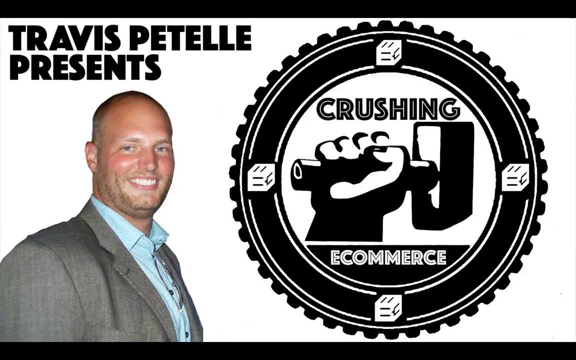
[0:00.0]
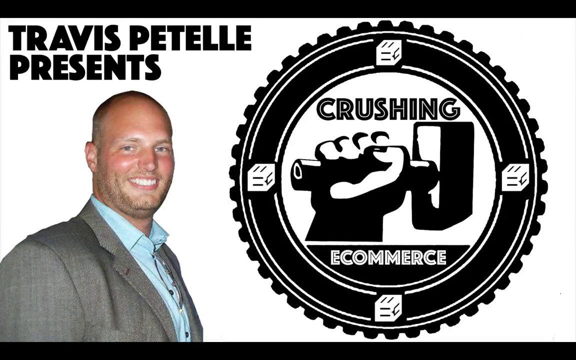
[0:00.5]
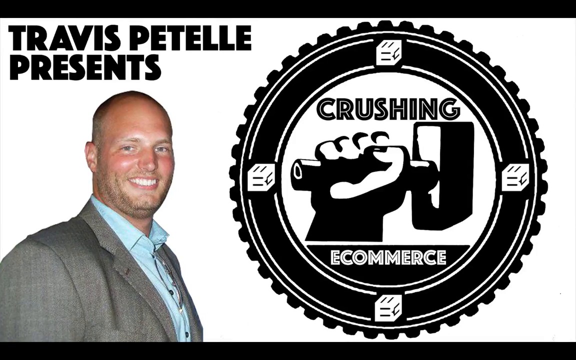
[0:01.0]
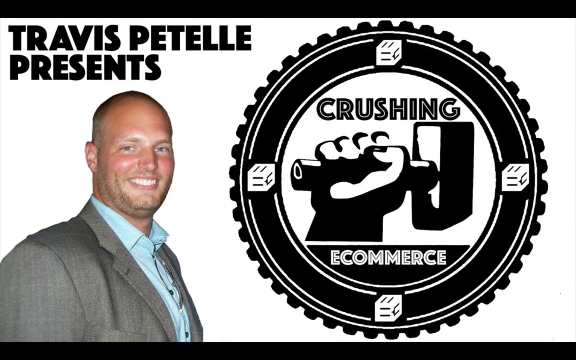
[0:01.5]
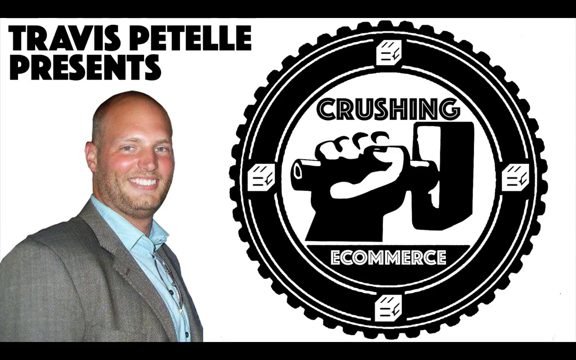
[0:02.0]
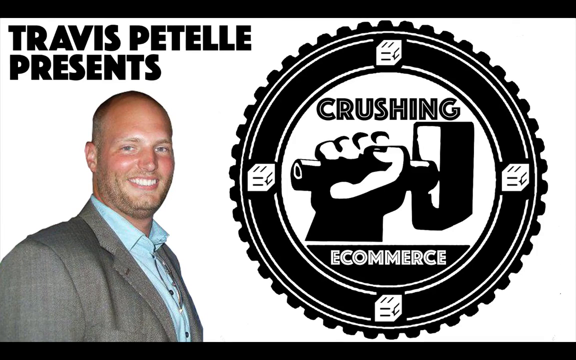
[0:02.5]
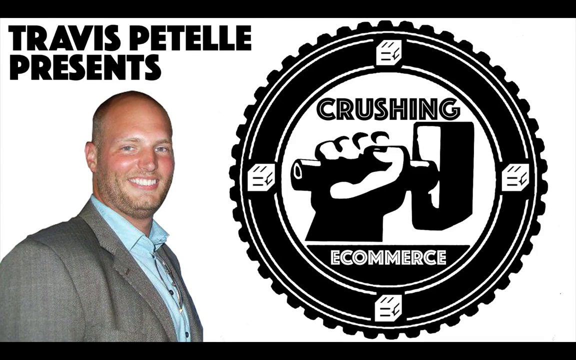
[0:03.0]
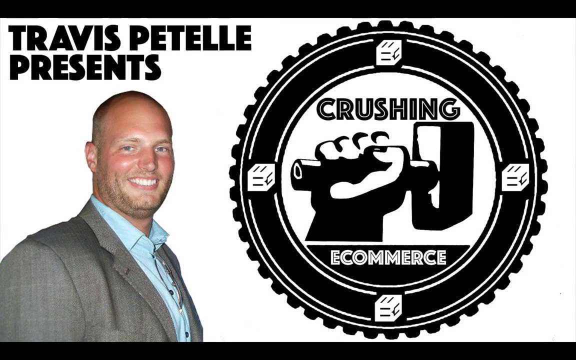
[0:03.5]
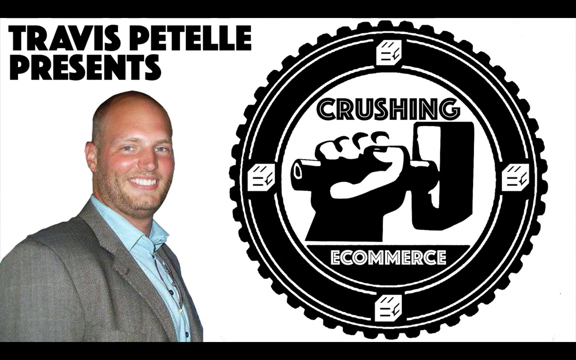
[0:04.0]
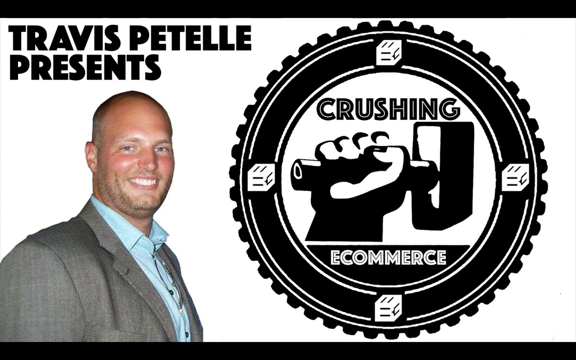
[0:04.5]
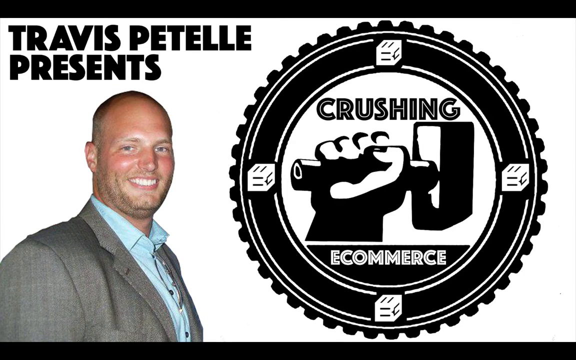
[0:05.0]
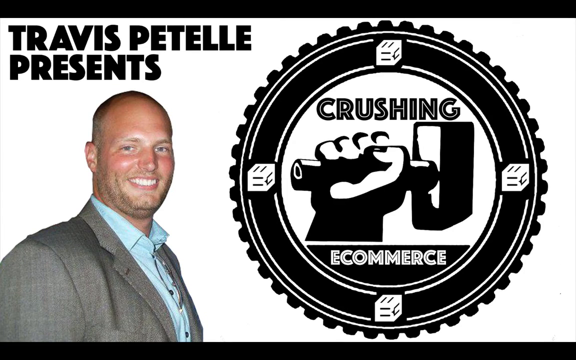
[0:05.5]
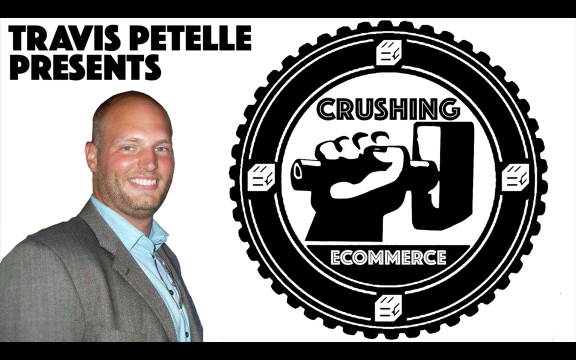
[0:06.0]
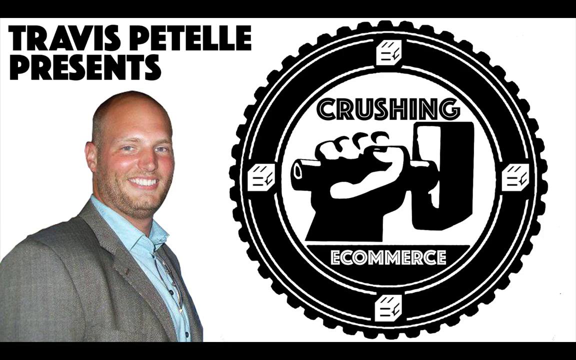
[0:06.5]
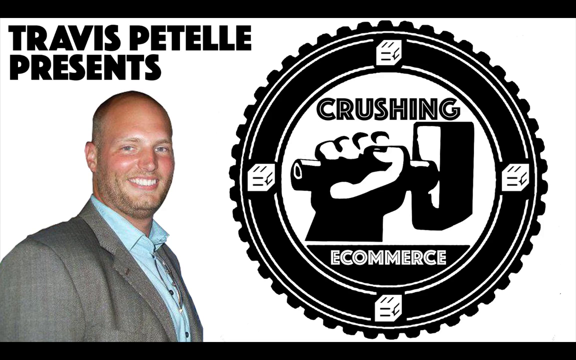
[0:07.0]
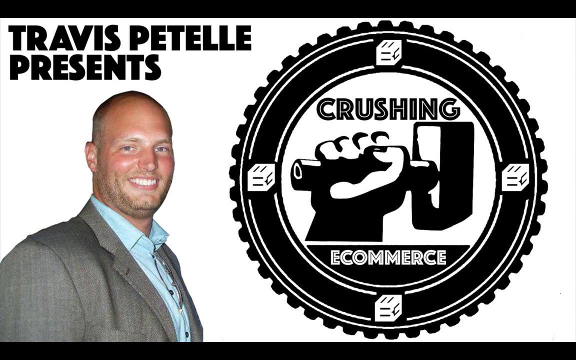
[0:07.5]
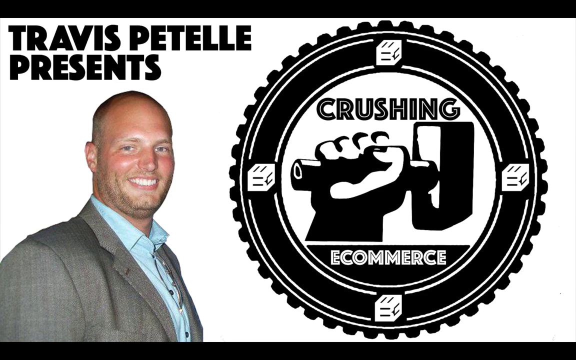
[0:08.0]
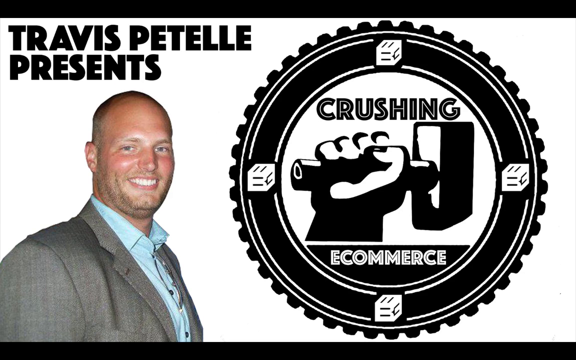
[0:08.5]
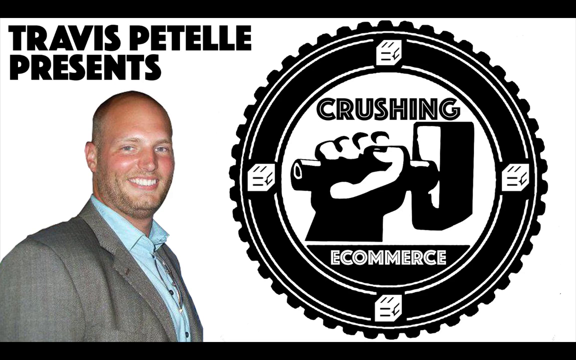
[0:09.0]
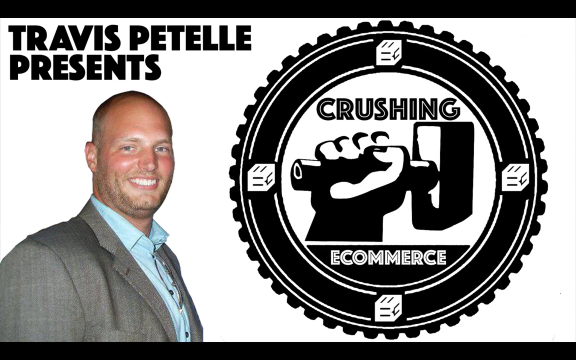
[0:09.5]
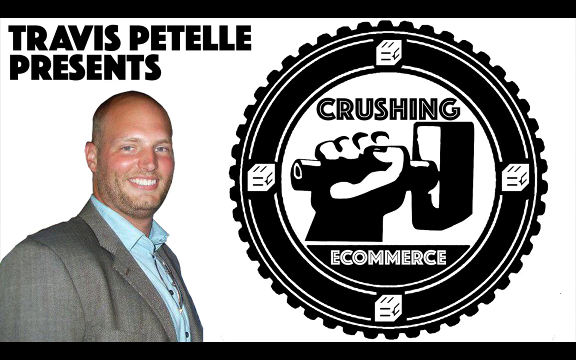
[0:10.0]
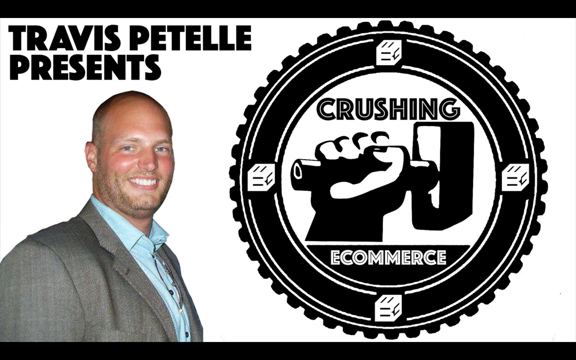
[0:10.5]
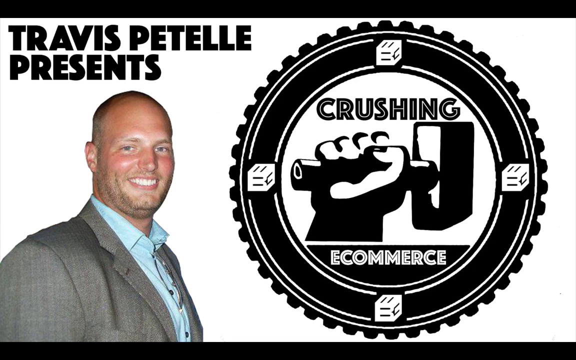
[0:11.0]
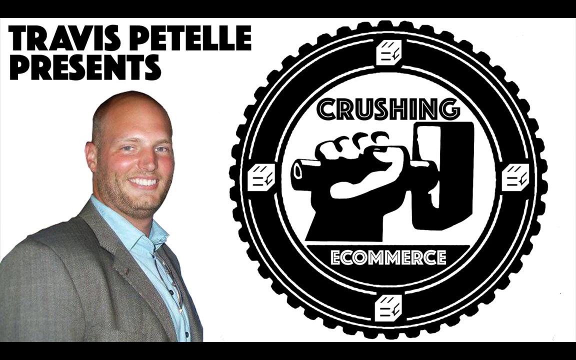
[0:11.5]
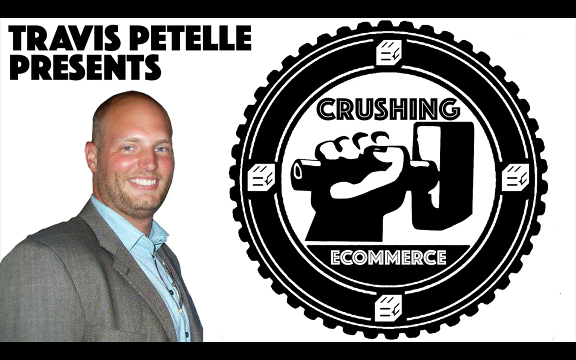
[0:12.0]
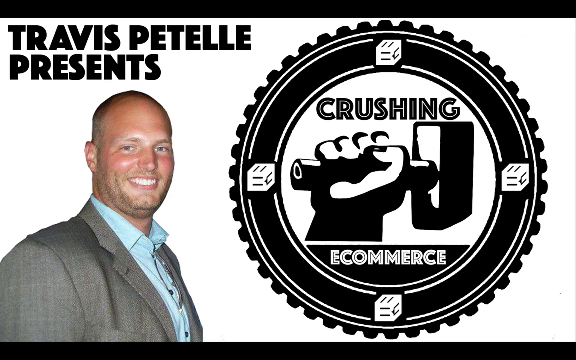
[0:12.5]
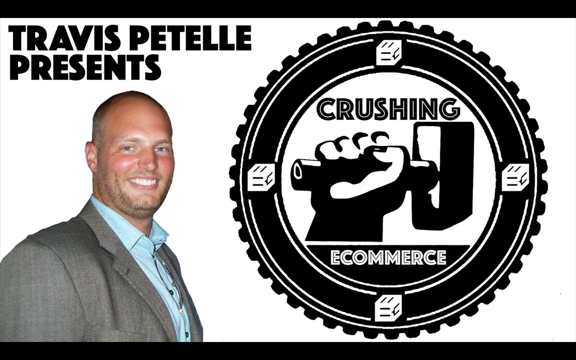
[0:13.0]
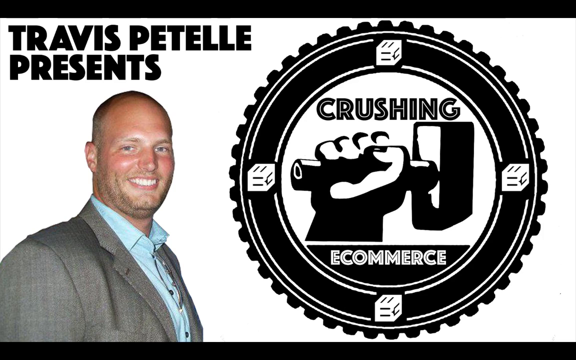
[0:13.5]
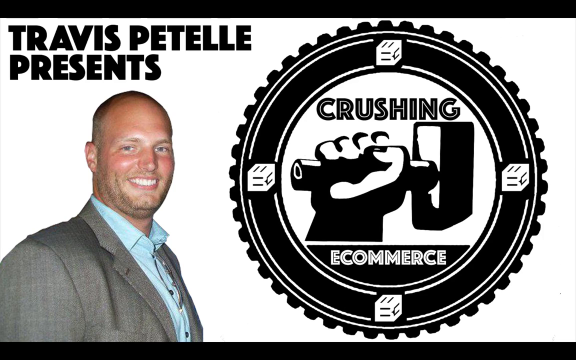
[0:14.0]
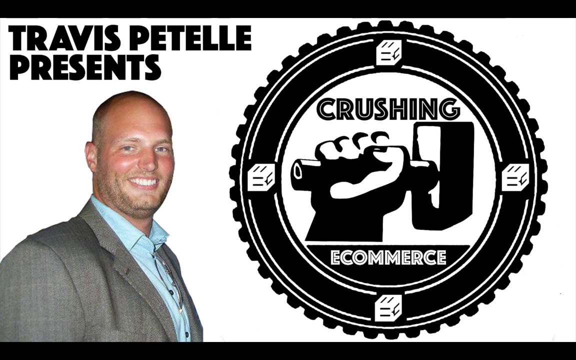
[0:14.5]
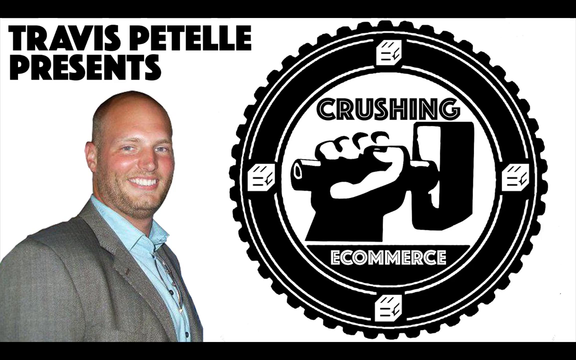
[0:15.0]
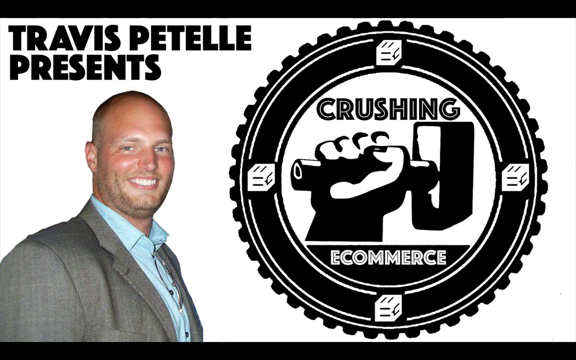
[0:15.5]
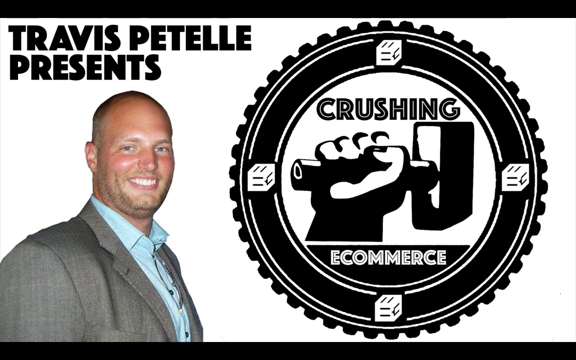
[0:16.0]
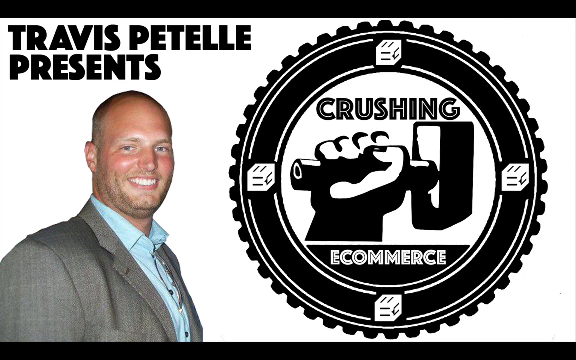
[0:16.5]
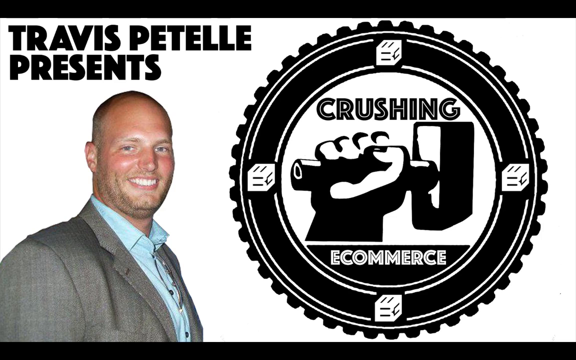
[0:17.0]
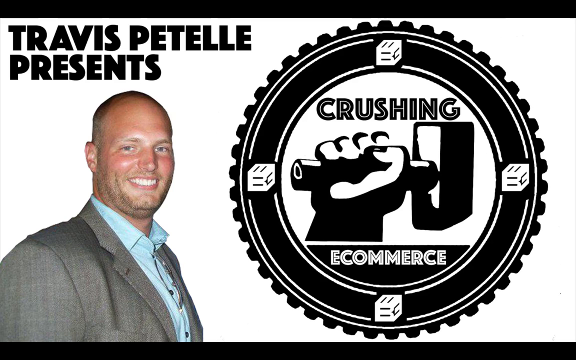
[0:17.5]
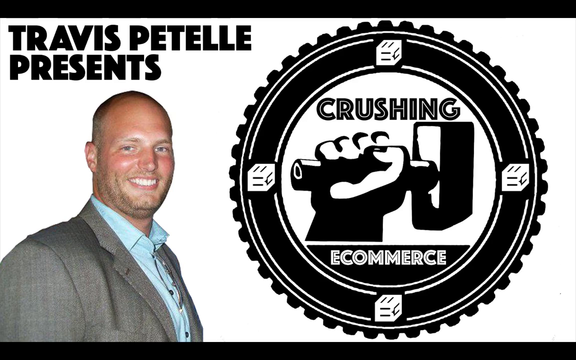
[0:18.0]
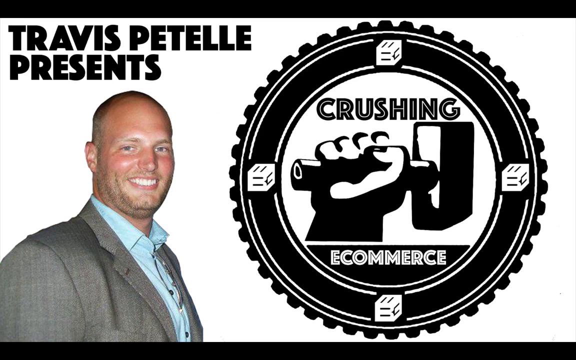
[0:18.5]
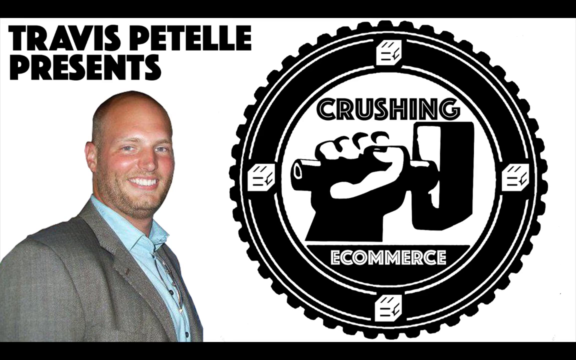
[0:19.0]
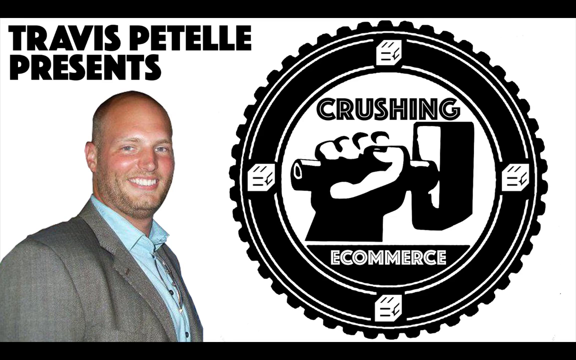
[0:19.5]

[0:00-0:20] In the upper left-hand corner is the name "Travis Petelle" (spelled P-E-T-E-L-L-E), with "Presents" underneath. A man's face is on screen; he turns his head toward the right side with a smile. On the right side is a logo reading "Crushing" and "ECOMMERCE". Between "Crushing" and "e-commerce" in the logo is an animated black-and-white right hand holding what may be a sledgehammer. The view stays on this for a little while. The company or person apparently aims to show people ways to make money online, possibly by starting a Shopify business or selling on Amazon or eBay.